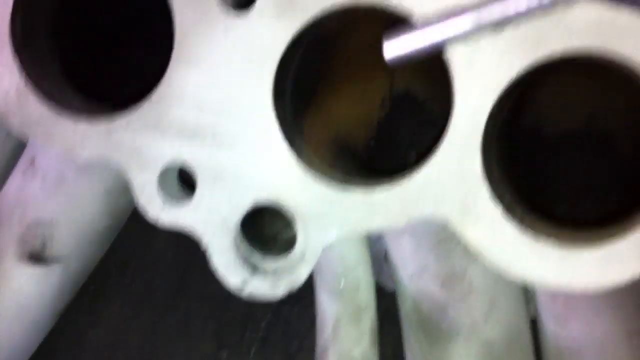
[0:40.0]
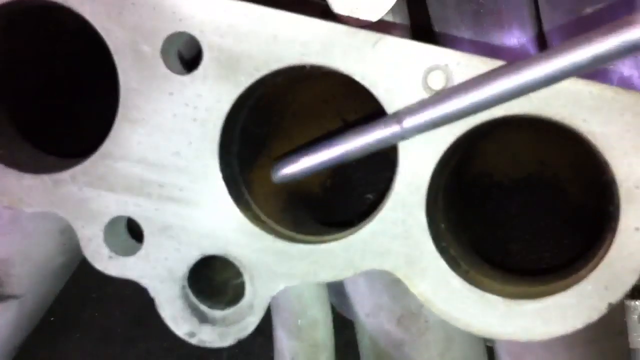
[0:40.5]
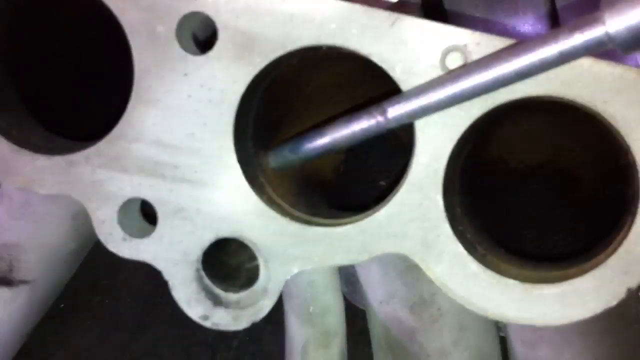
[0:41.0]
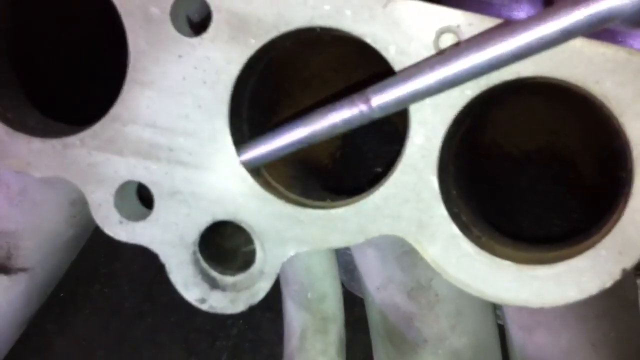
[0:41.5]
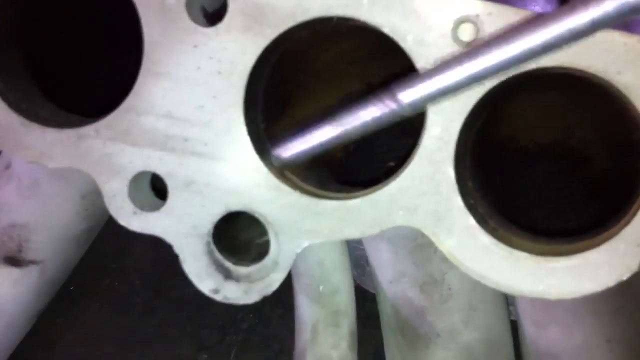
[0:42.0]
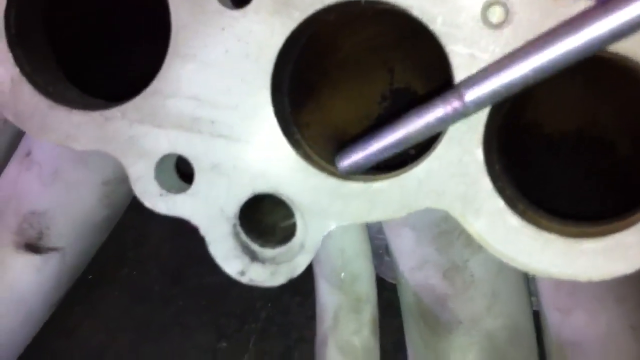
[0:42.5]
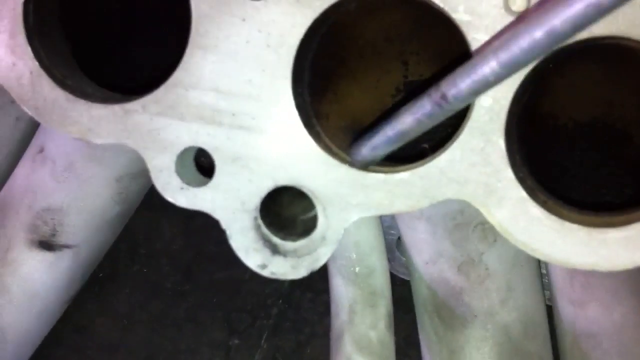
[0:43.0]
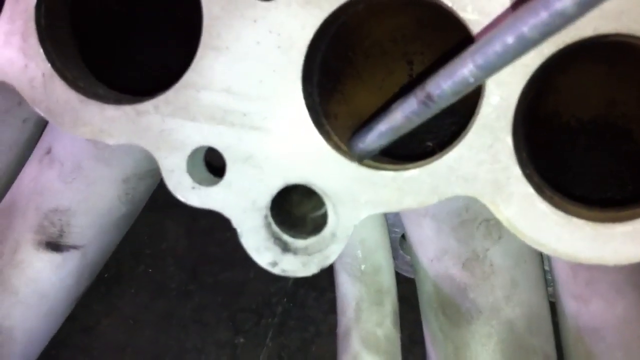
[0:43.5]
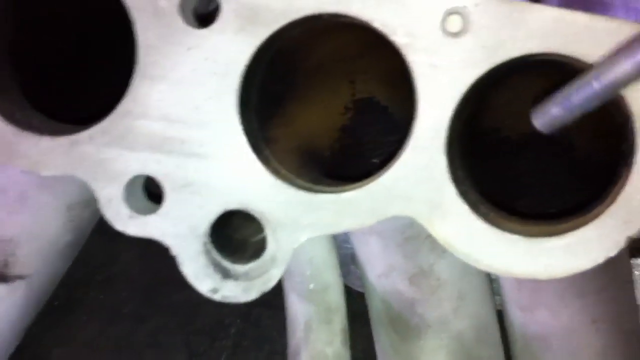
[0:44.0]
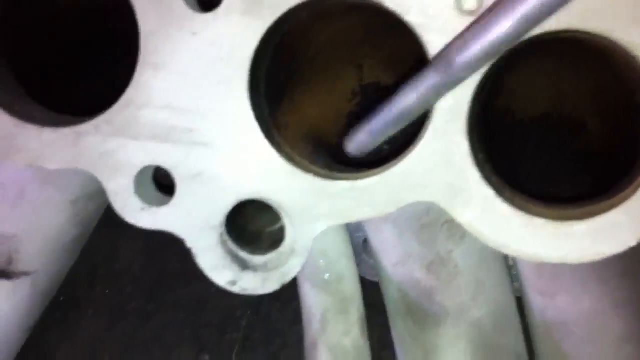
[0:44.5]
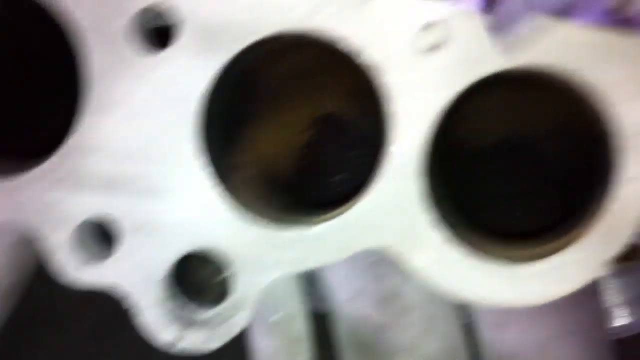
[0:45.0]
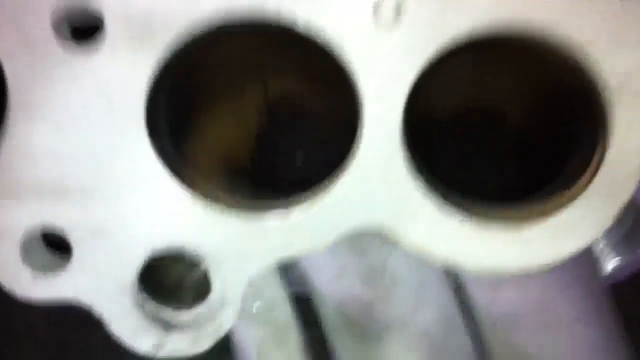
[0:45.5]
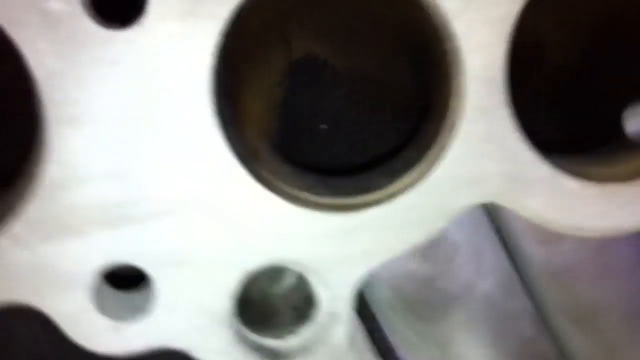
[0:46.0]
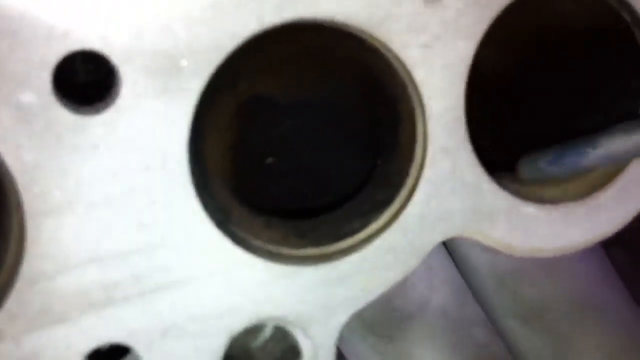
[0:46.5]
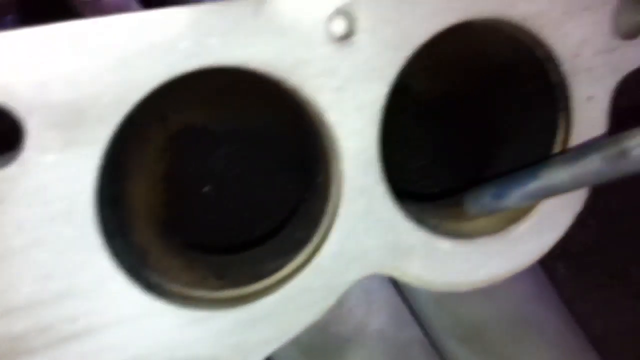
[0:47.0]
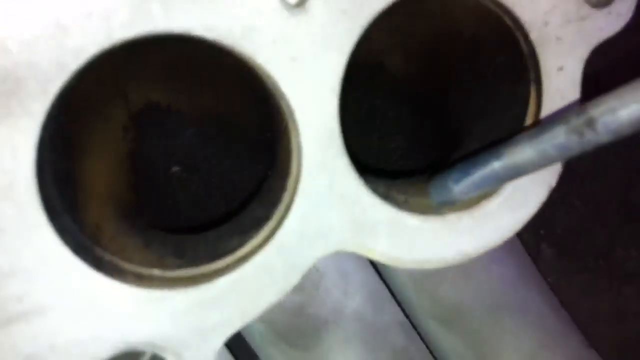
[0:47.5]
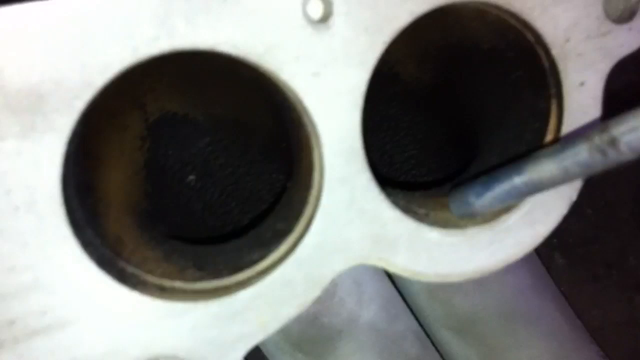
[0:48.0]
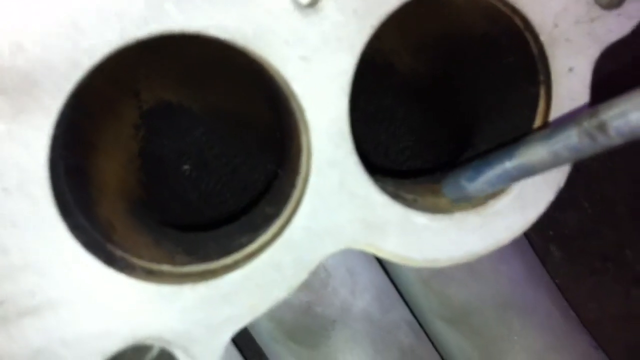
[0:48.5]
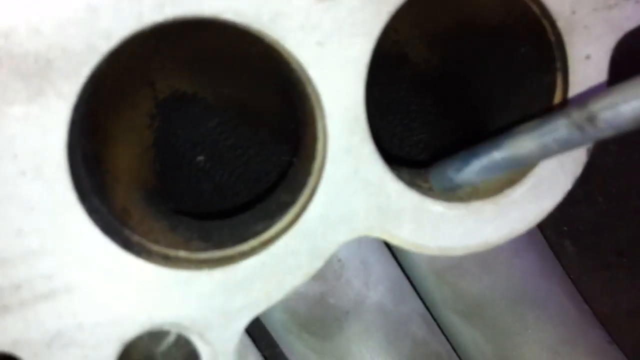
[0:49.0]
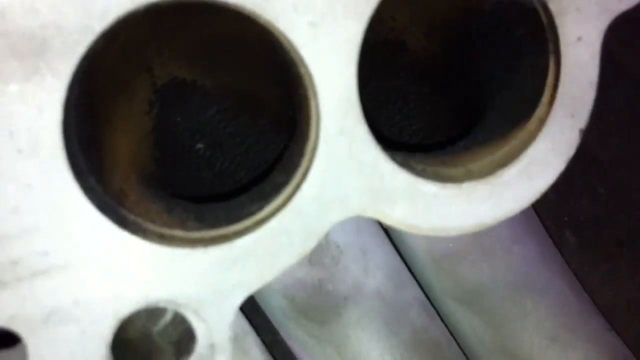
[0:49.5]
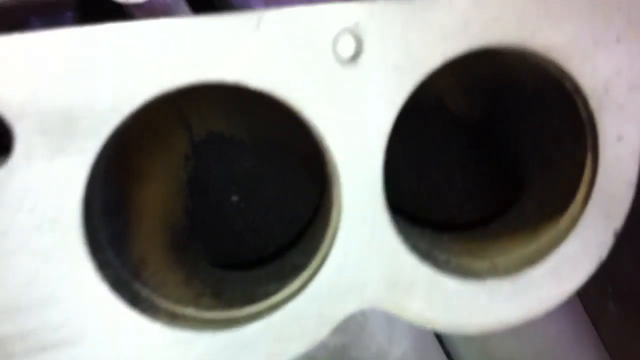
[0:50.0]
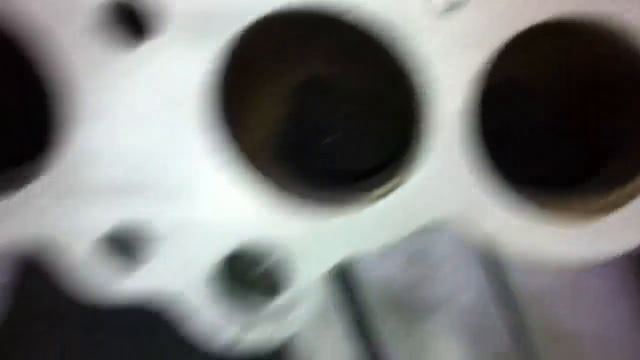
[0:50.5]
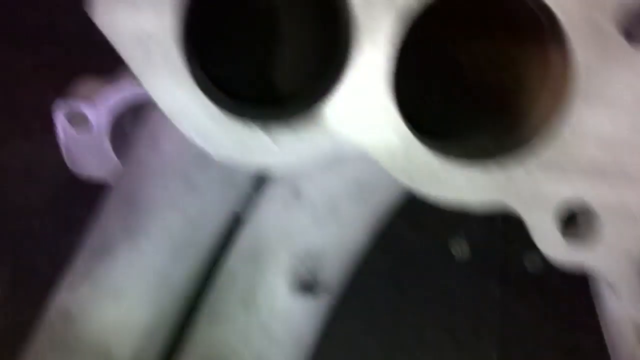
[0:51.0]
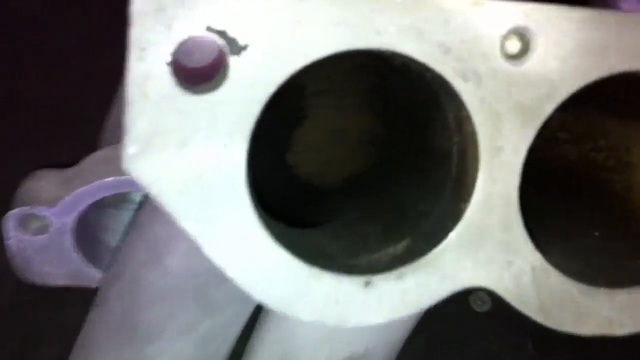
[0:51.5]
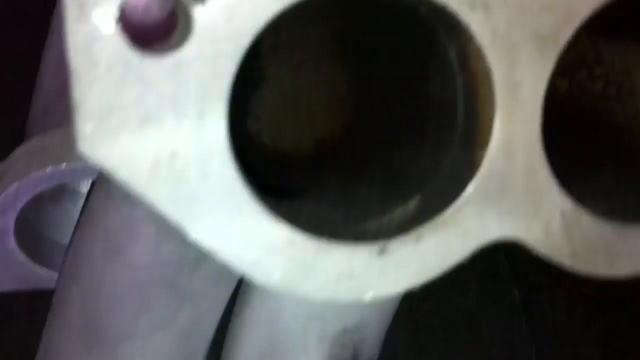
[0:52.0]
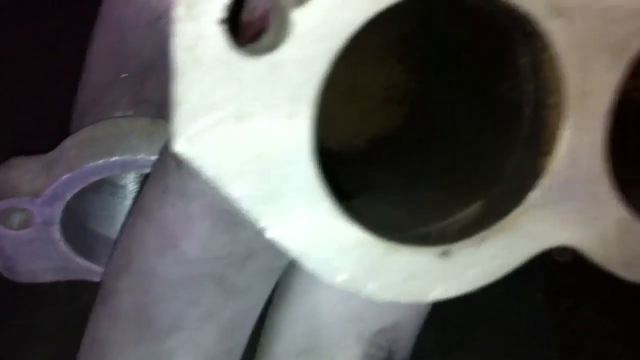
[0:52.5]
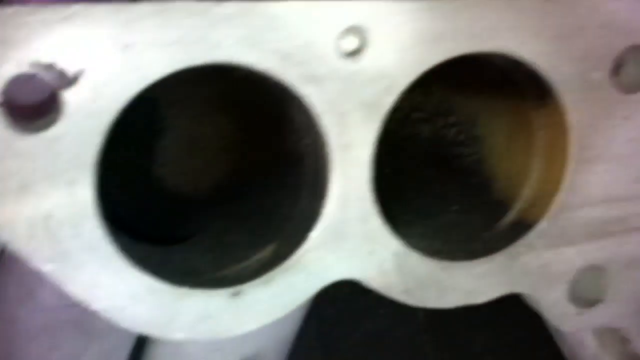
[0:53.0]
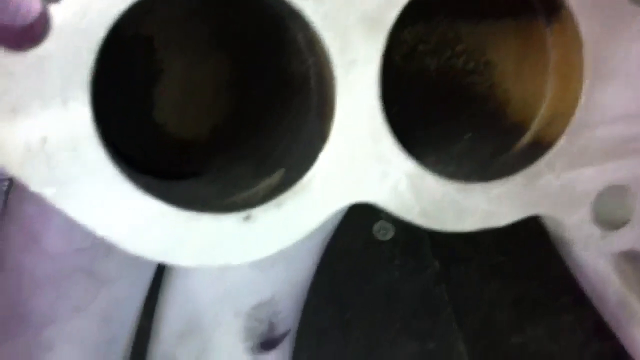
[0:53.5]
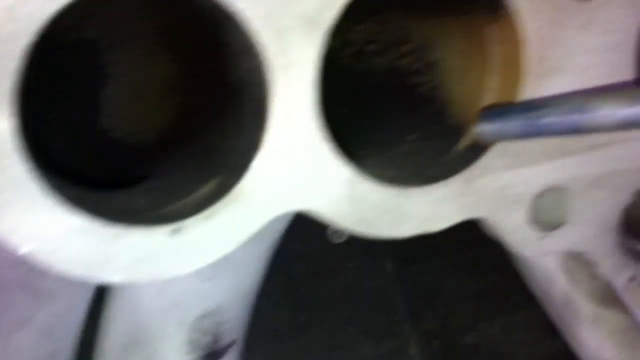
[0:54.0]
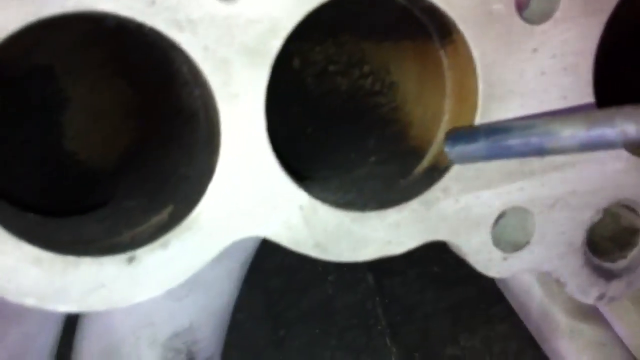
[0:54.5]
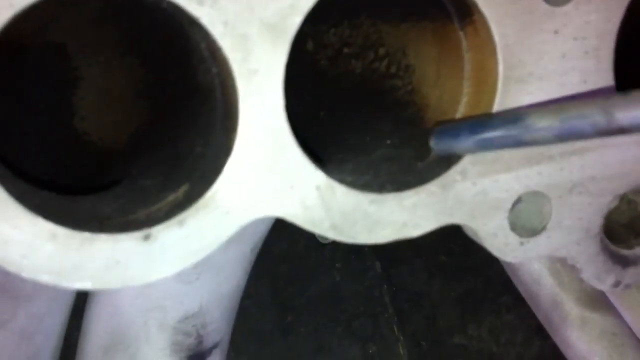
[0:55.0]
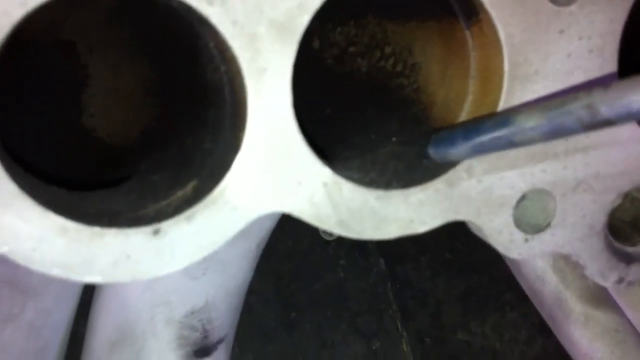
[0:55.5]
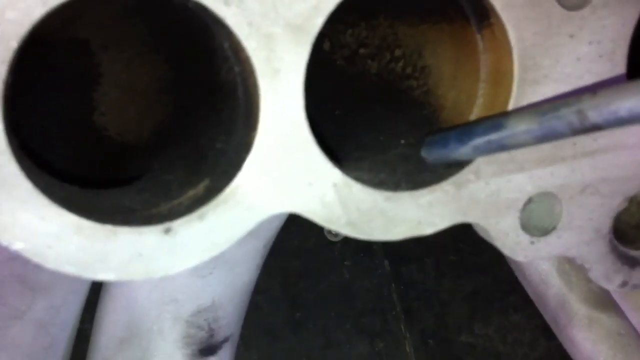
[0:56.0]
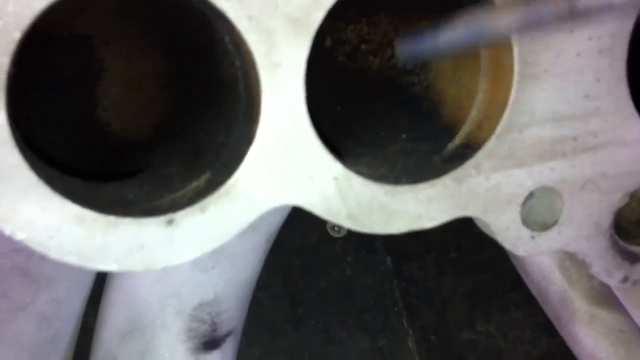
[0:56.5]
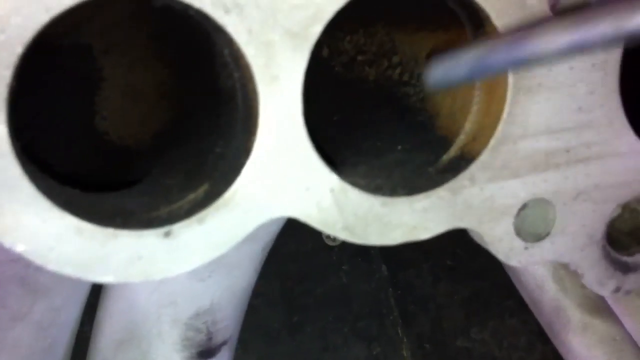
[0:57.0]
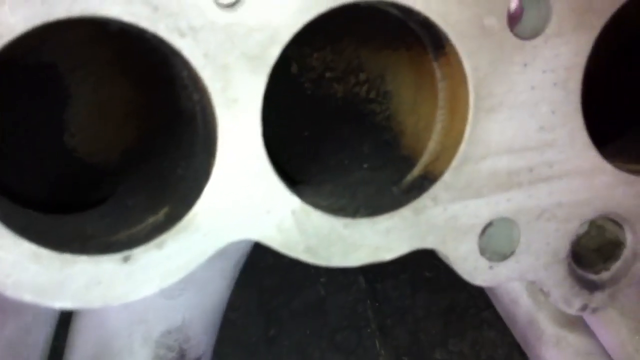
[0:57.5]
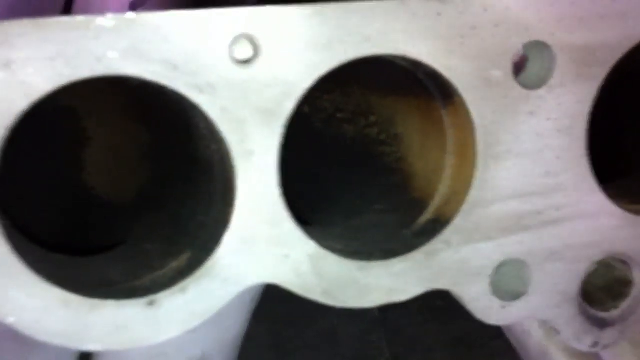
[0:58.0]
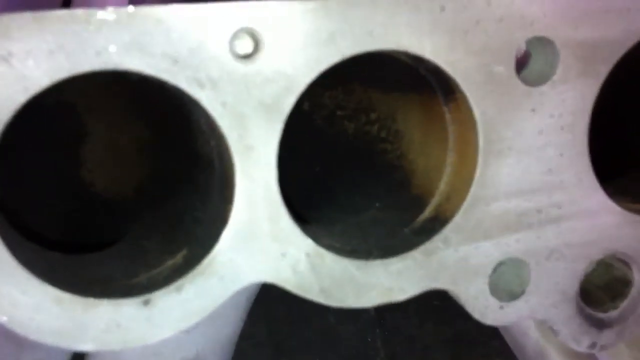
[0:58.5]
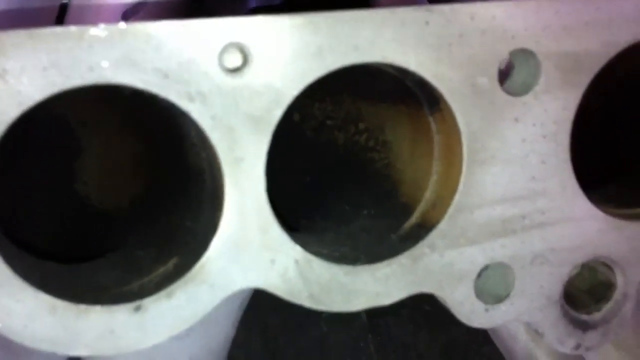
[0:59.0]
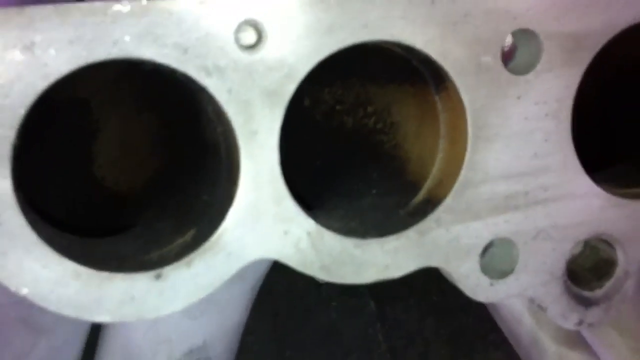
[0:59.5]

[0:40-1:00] The metal plates that connect the four metal pipes together are shown close up. Someone takes a metal rod, scratches the side of a hole a little, then goes across the hole, checking each one. Looking down a hole shows only darker shading; the view does not reach through to the pipe. Smaller holes are around the plate, but the person checks the larger holes, very gently, sort of scraping the side a little and then kind of shaking the rod off within the hole opening. The view is a close-up of each hole and the metal rod carefully testing the metal sides of the holes.